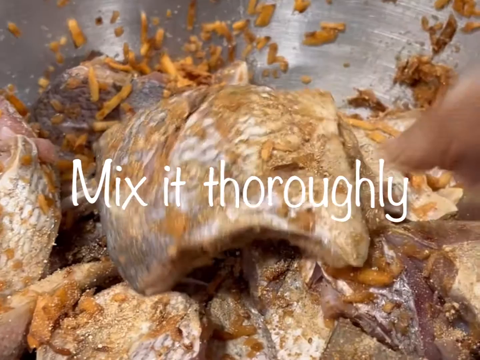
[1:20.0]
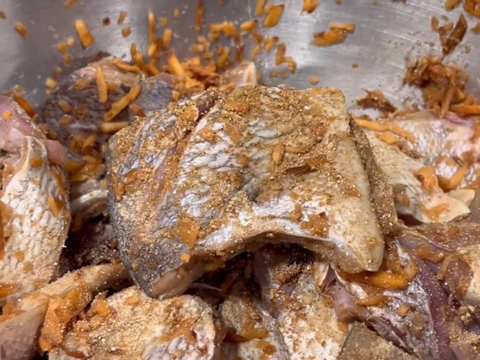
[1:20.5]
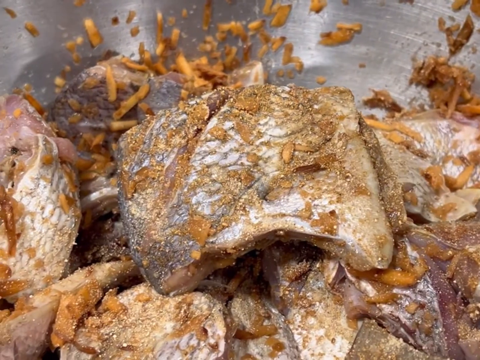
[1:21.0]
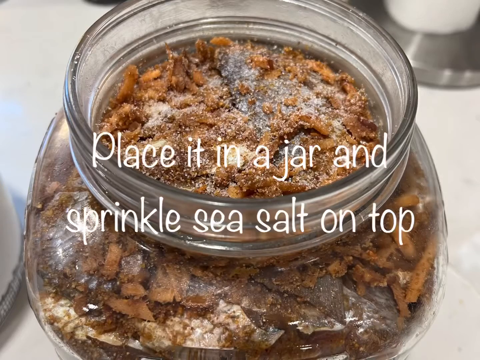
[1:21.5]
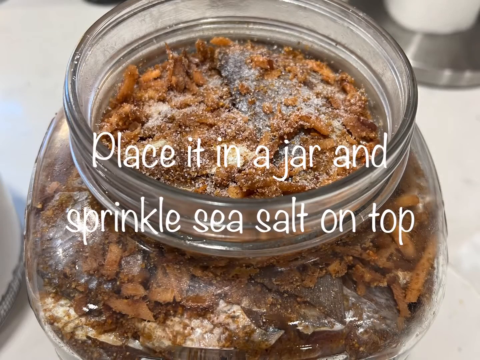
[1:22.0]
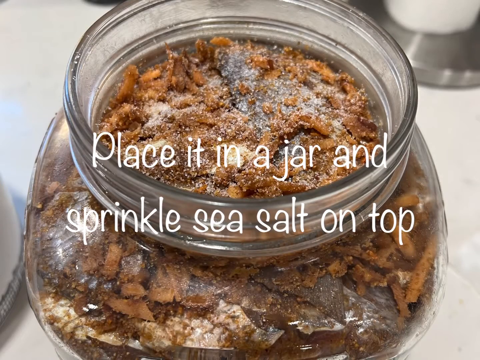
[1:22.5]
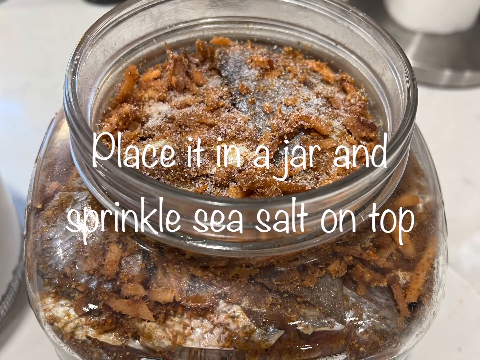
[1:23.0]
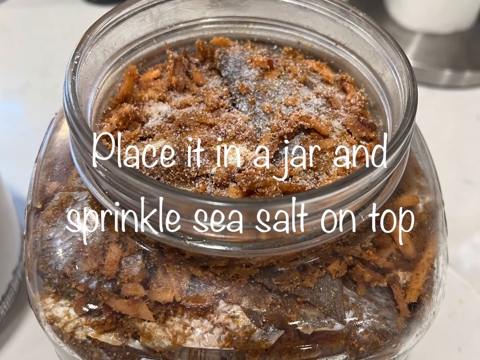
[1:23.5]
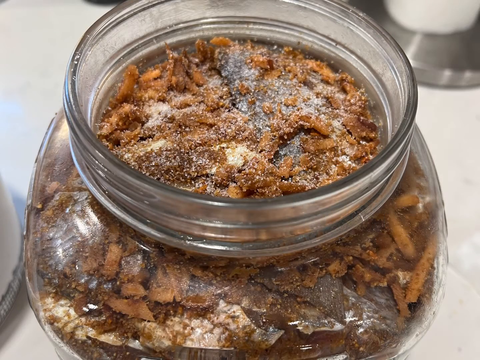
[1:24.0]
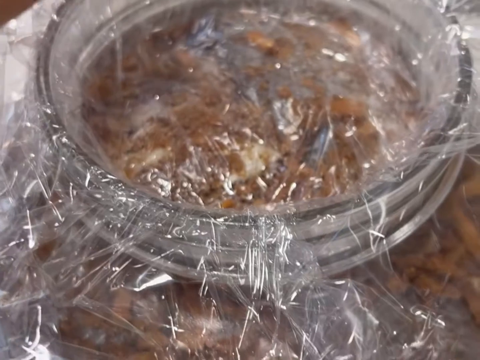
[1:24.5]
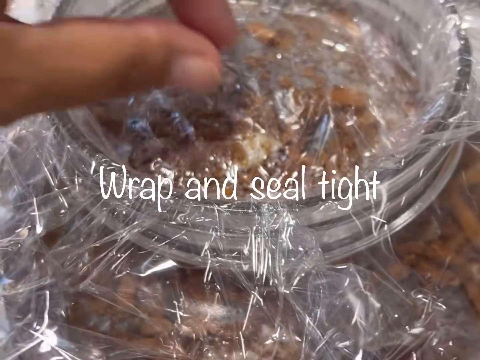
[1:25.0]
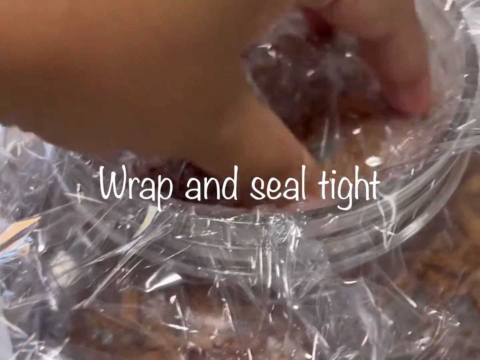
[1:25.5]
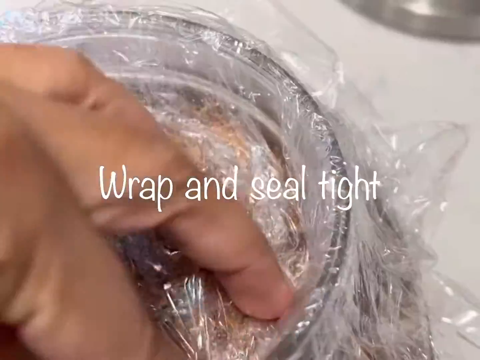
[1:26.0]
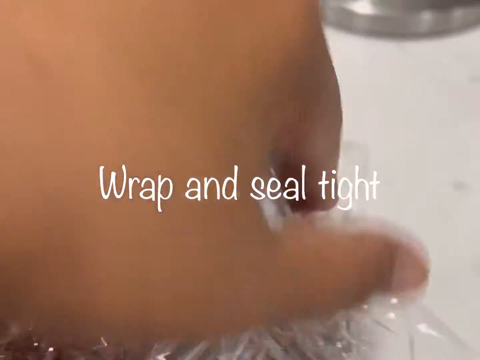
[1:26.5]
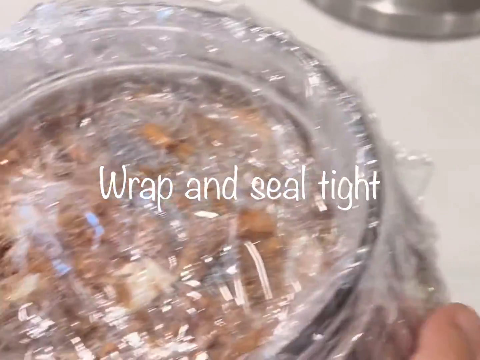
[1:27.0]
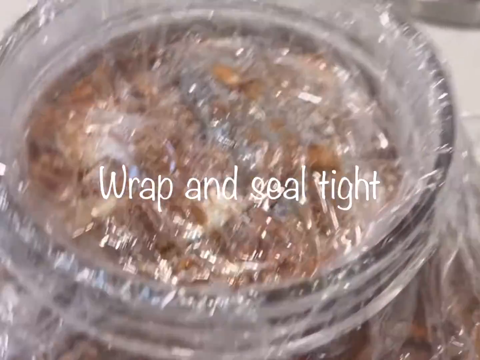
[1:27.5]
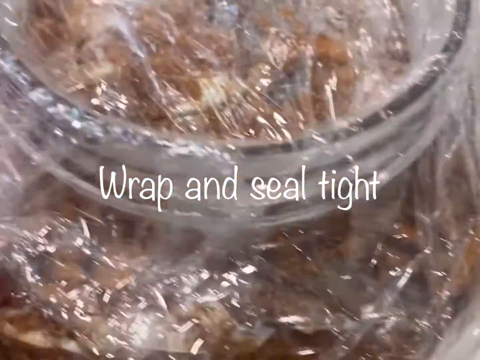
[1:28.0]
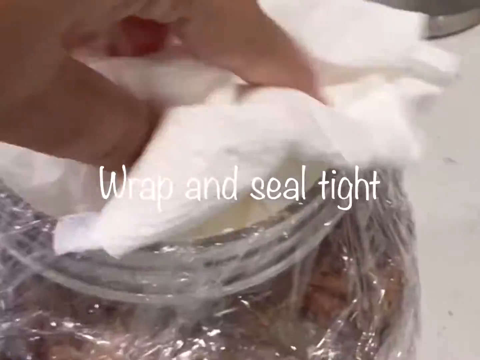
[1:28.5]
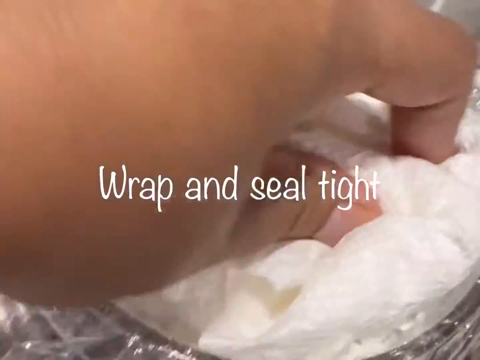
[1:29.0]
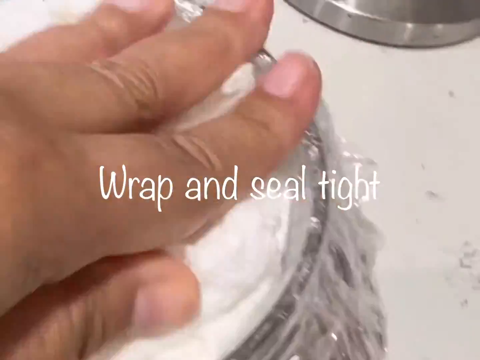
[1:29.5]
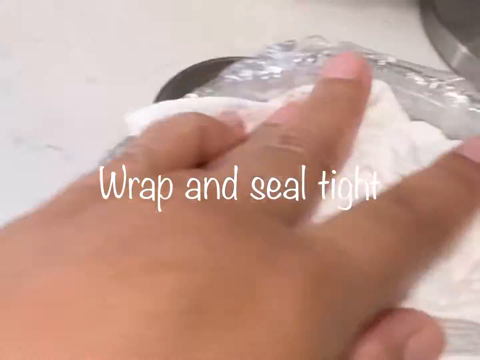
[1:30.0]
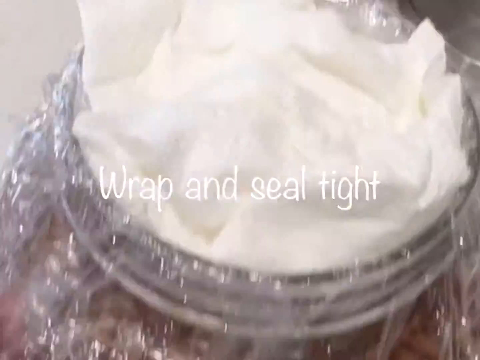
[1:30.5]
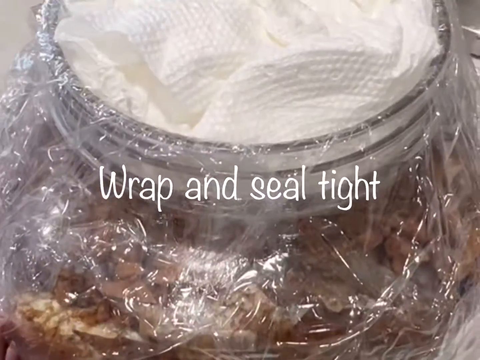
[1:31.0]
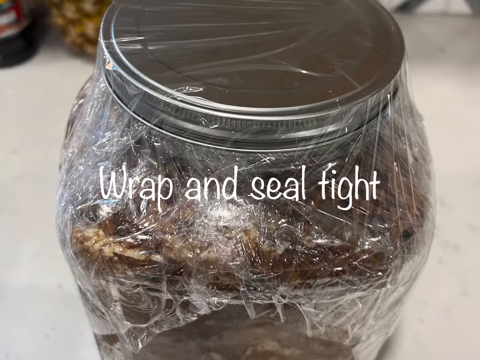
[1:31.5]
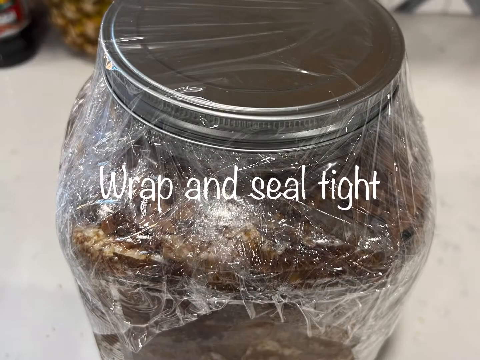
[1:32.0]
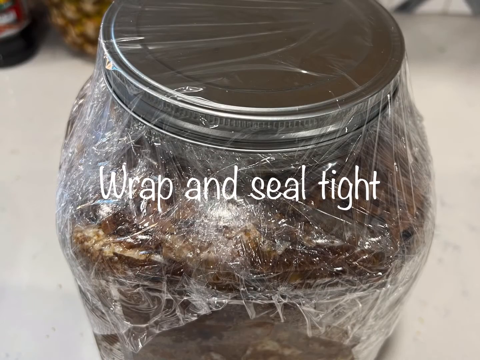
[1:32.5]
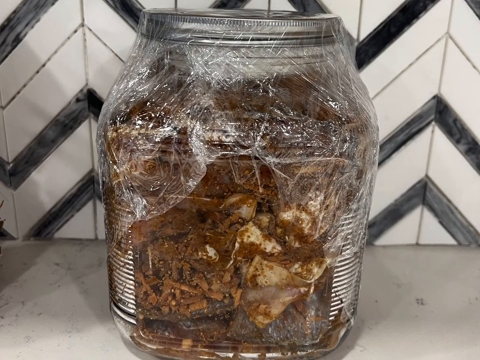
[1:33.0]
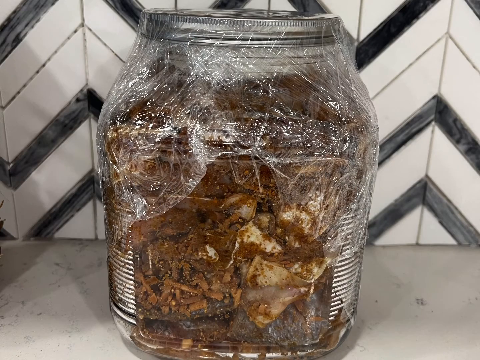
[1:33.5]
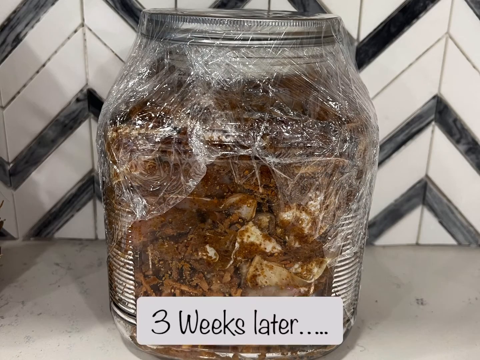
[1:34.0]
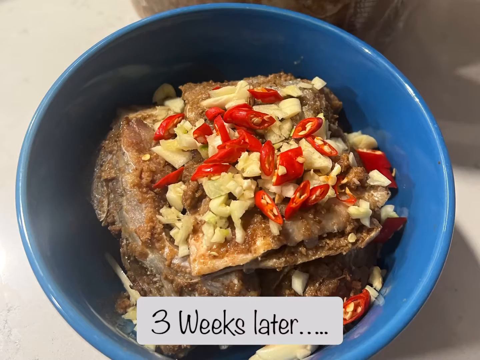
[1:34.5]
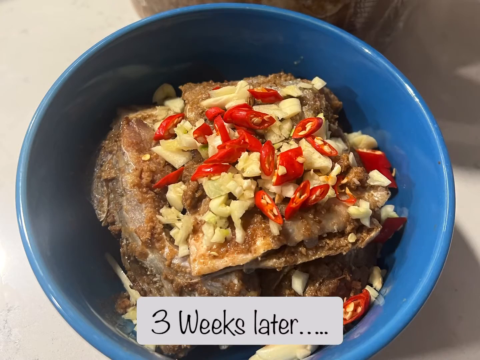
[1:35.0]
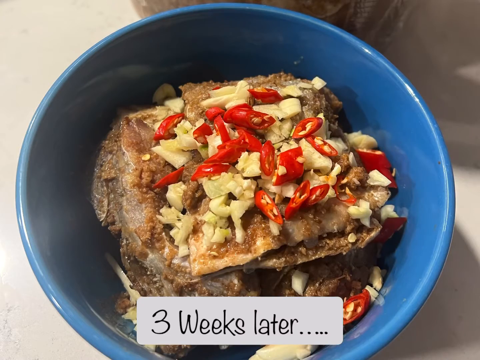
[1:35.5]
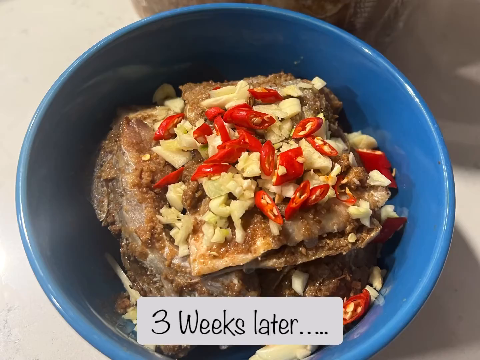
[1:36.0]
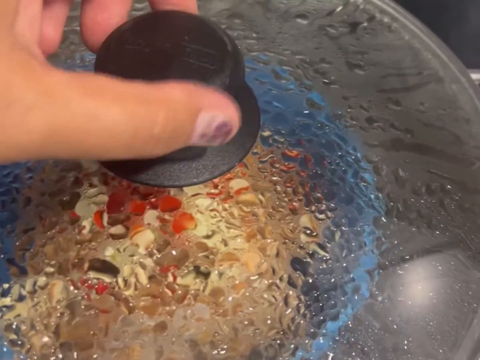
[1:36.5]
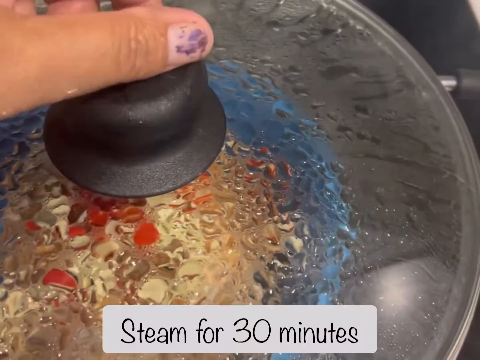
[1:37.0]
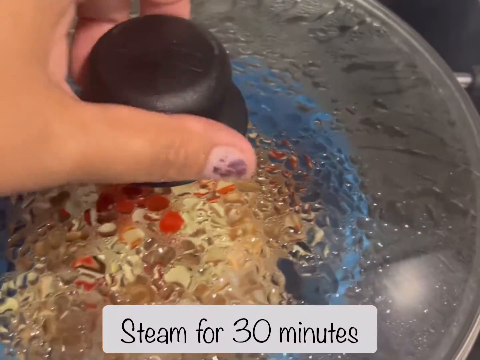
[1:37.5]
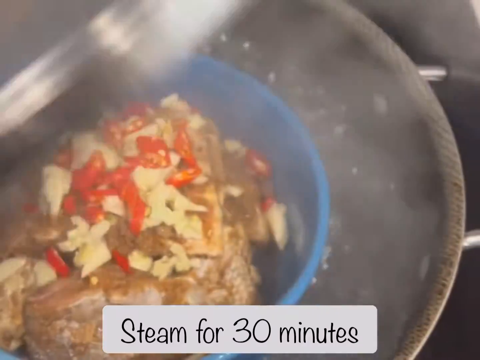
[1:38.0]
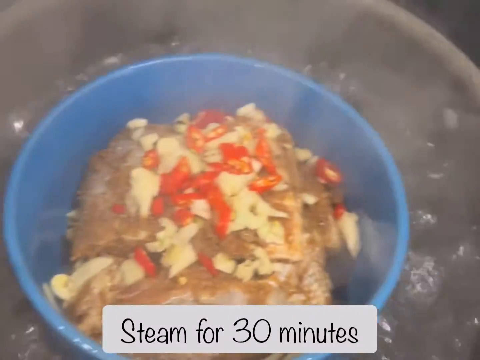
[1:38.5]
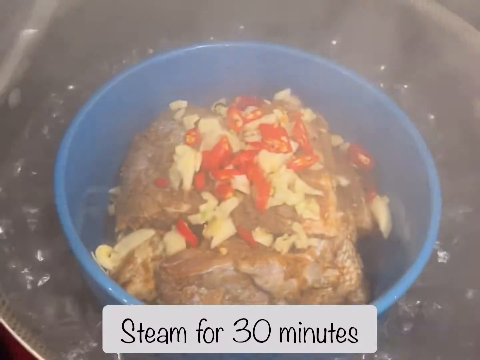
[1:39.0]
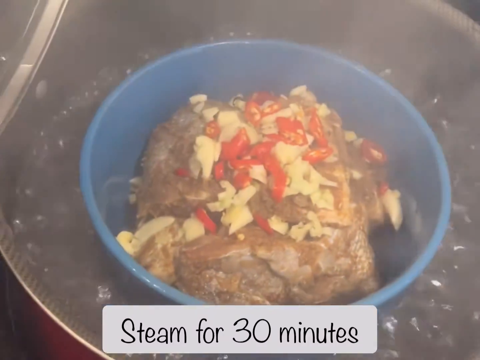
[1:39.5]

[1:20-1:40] In real-time speed, the mixture is put into a jar and sealed quite tightly. Cling film is pushed directly onto the food and around the jar, and an unidentified white material is added on top of that before the lid. Text then appears suggesting a wait of three weeks with the mixture in the jar, followed by footage of it being cooked in a pot or some sort of pan. There appear to be some sort of chillies on top of the food as it cooks.